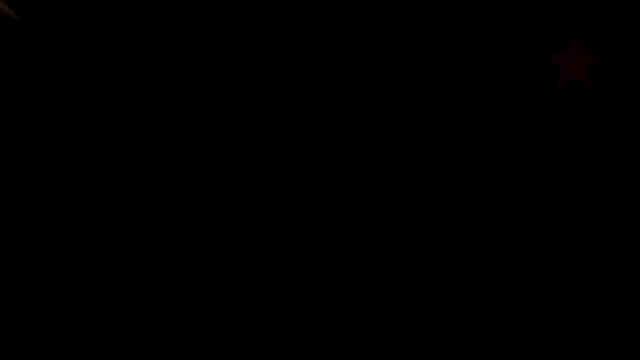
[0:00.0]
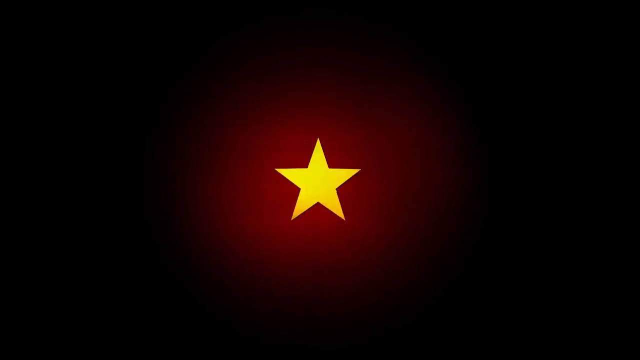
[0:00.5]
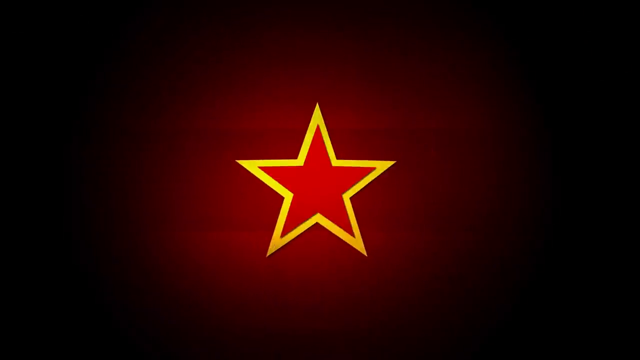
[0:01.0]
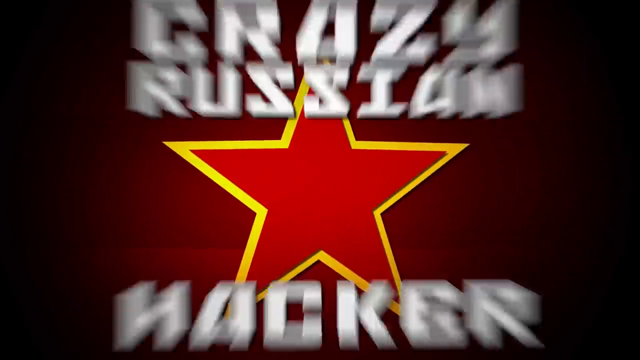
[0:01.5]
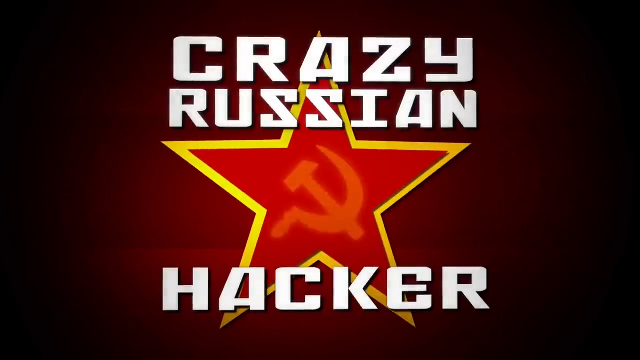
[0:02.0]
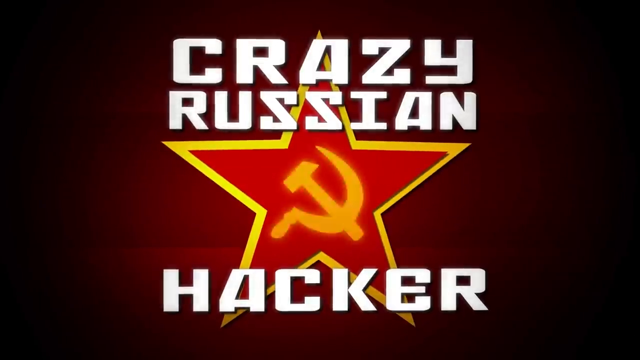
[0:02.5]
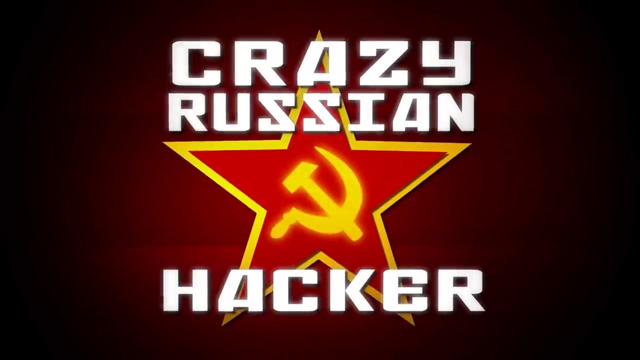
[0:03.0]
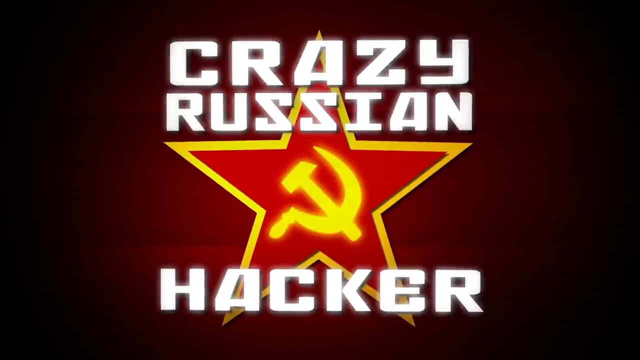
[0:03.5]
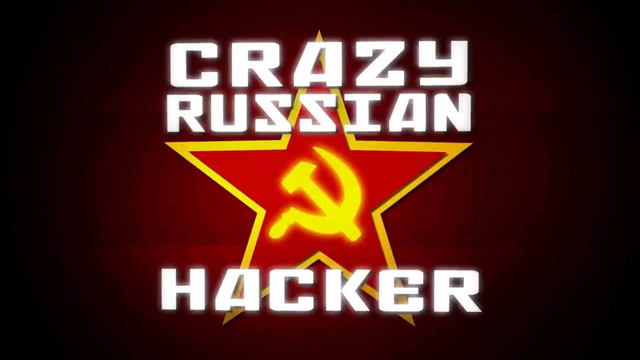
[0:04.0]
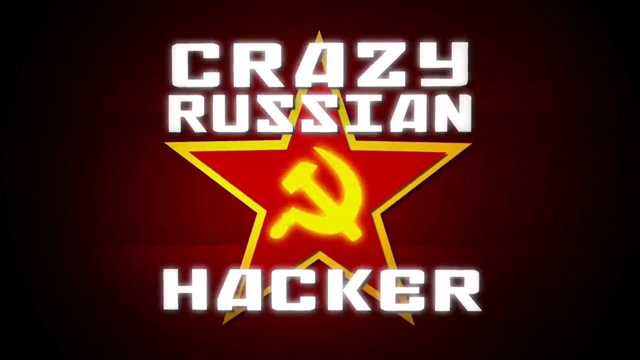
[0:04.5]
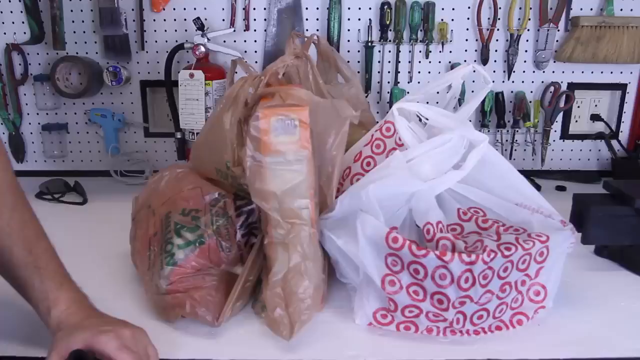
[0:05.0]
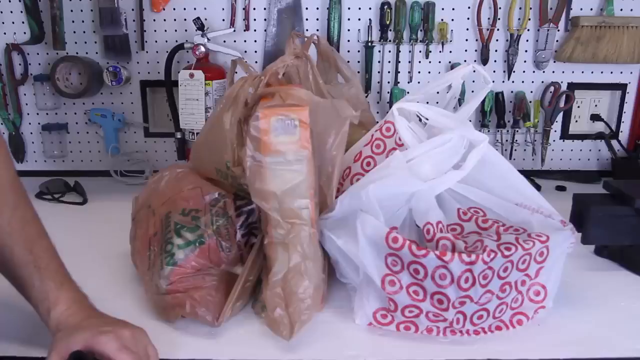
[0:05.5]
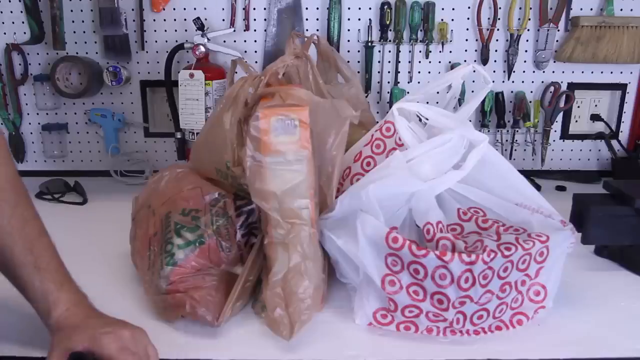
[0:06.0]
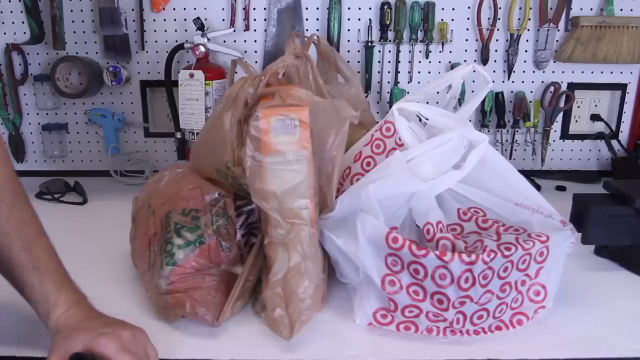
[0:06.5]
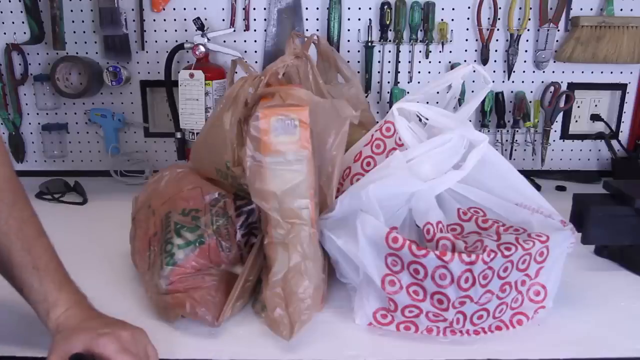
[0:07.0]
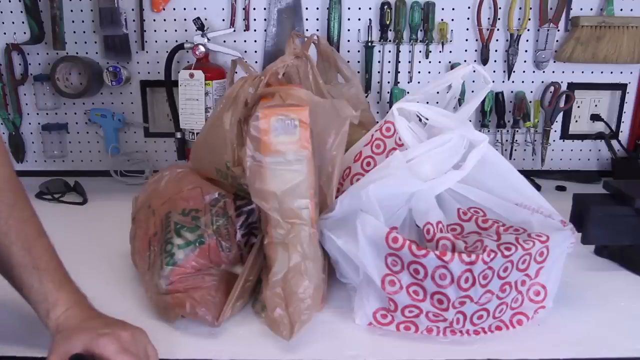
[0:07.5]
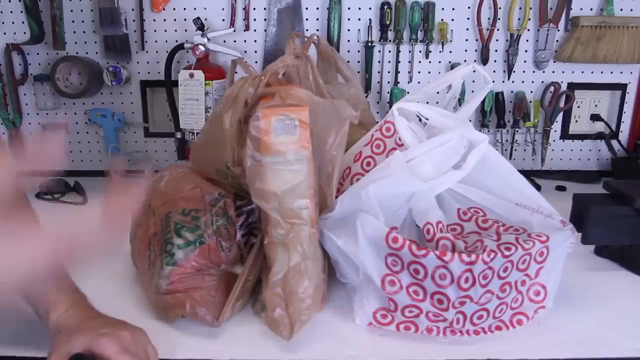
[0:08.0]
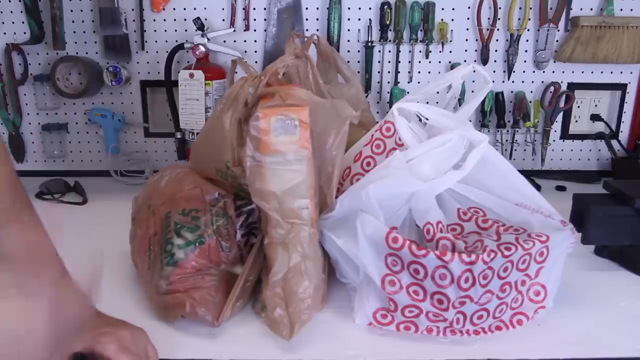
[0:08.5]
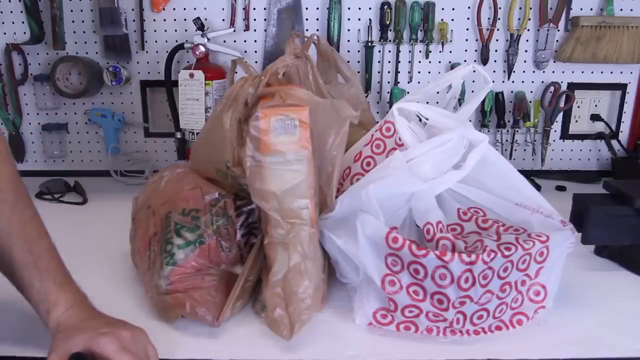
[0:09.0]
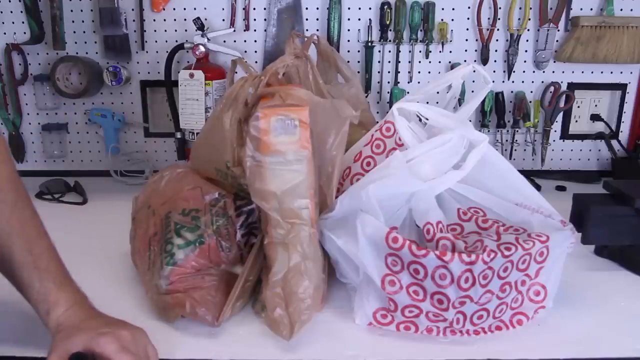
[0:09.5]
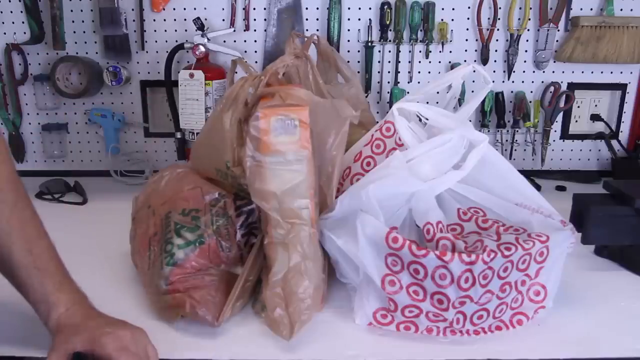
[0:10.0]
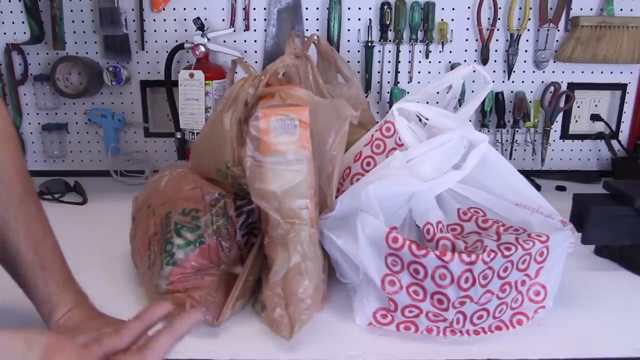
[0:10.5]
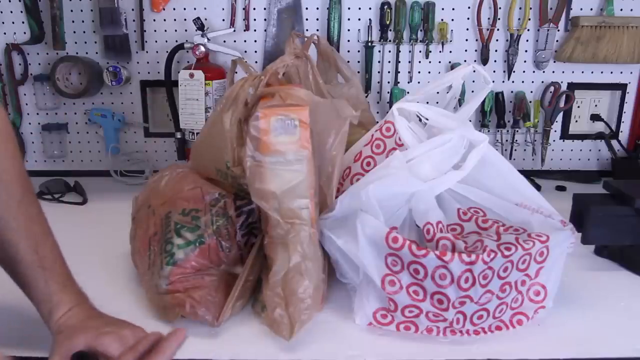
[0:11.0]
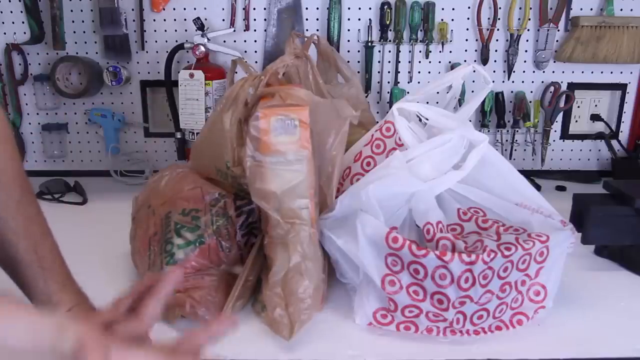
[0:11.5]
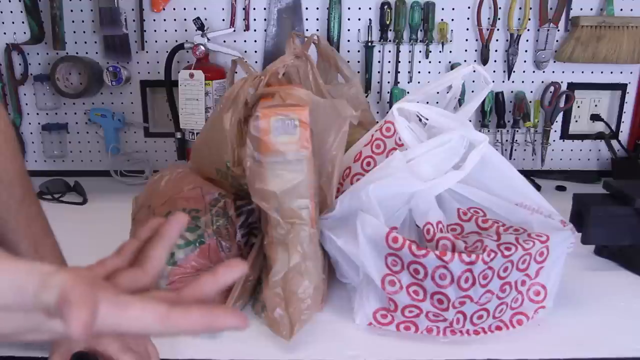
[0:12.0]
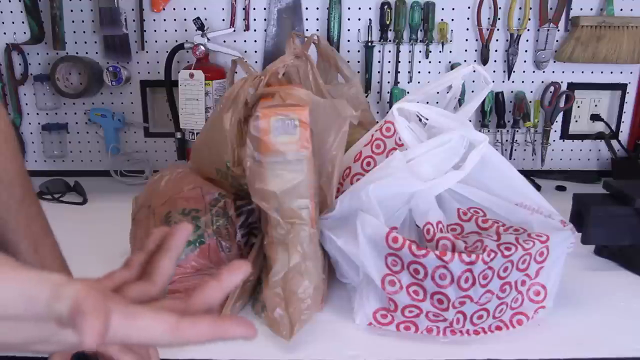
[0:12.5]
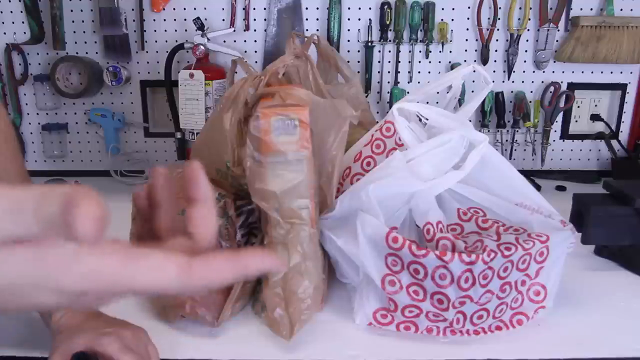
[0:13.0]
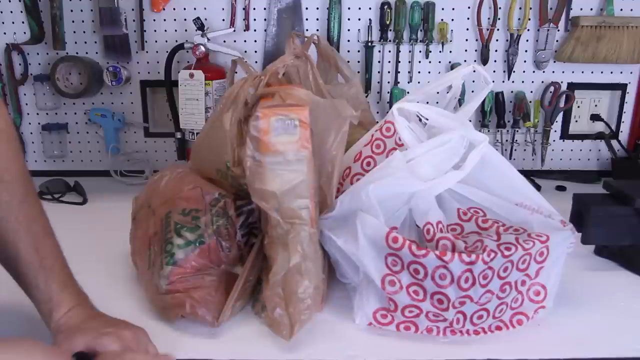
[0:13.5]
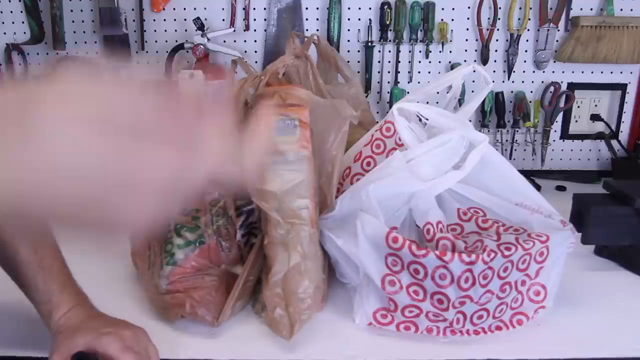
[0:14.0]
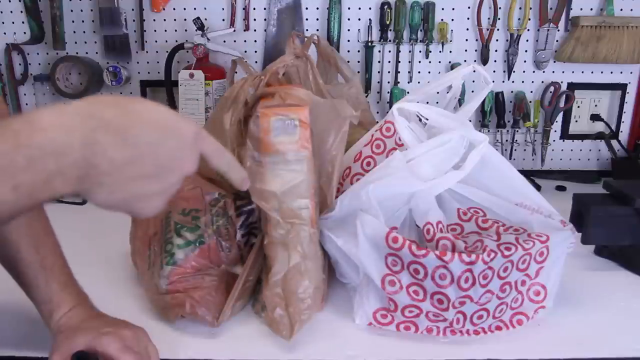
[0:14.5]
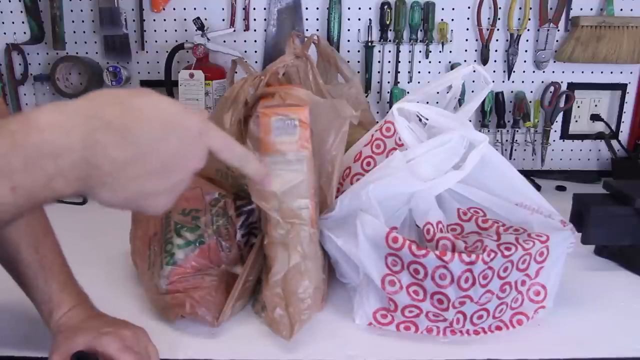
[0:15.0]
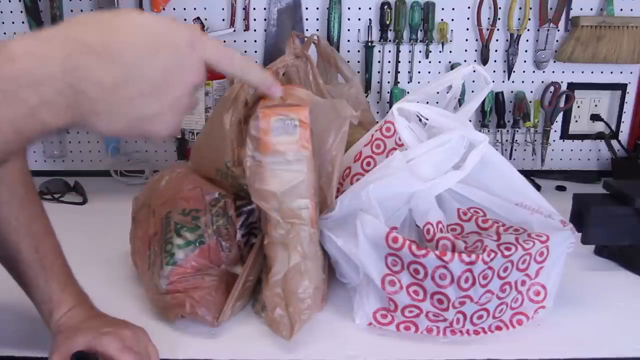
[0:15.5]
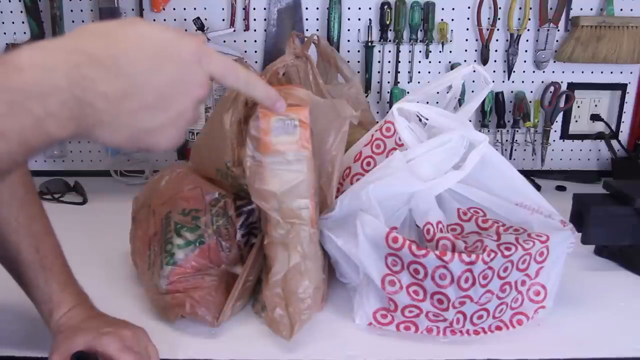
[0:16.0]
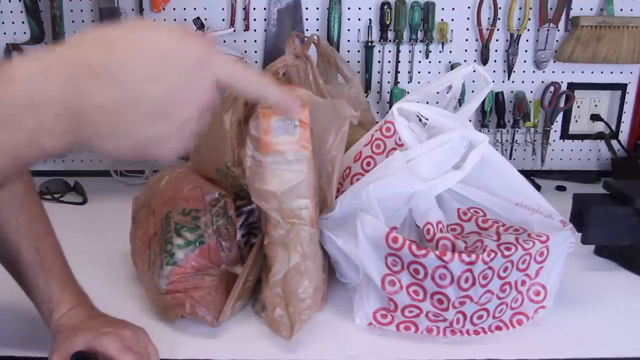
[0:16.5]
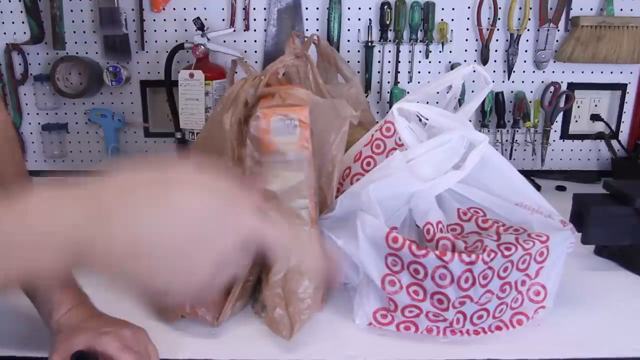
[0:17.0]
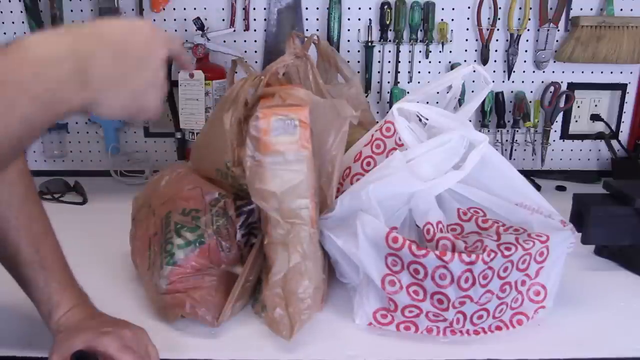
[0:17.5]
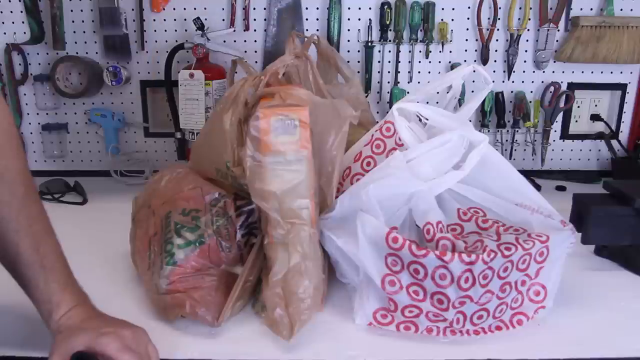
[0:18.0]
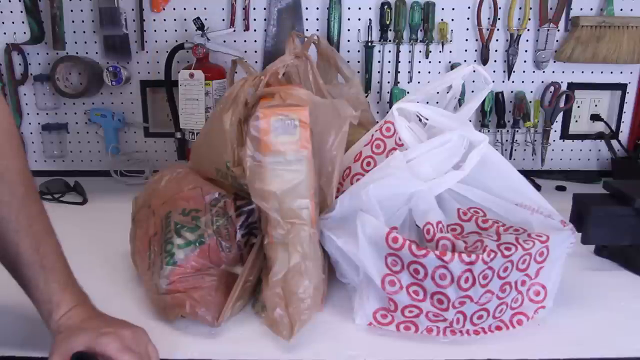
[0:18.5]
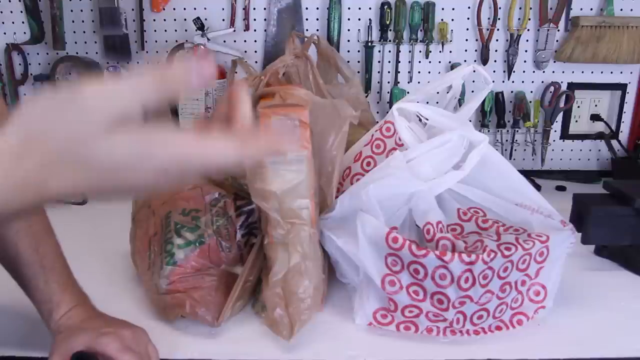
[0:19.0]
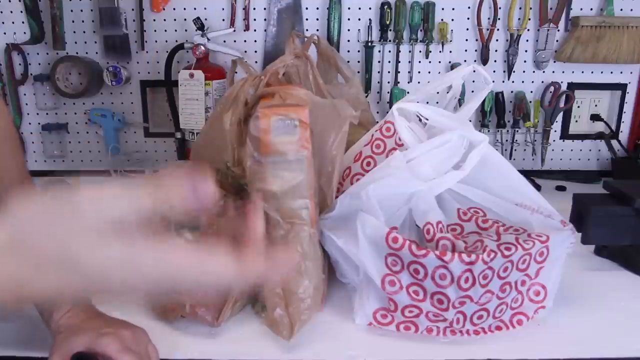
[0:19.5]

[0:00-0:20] The video opens with an image of a sickle and hammer encased in a star, along with the name Crazy Russian Hacker. It then transitions to a variety of bags. Some look like they are from Target, while the others are possibly from another local grocery store and seem to be from the West Coast. The Target bag is white with a red Target symbol on it, and the other bags are brown with a name scribbled on them indicating the store they came from.